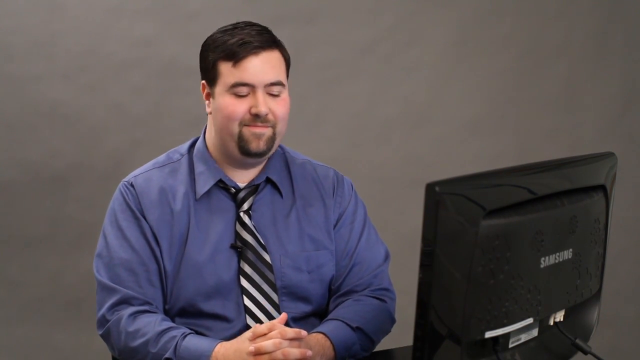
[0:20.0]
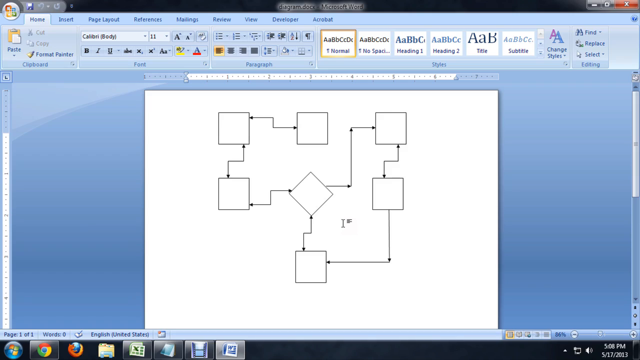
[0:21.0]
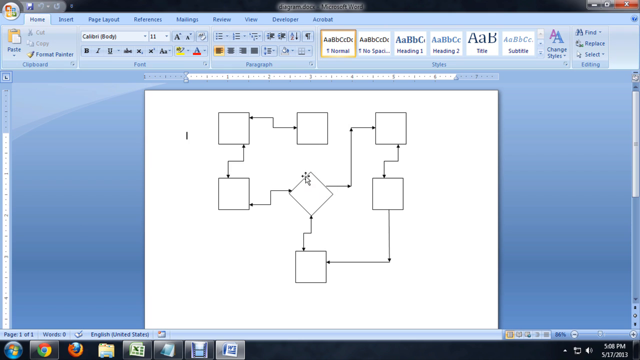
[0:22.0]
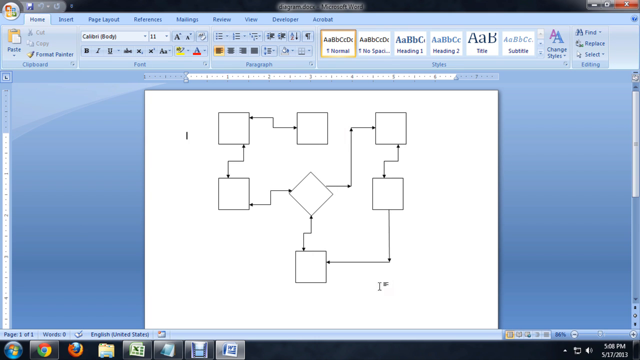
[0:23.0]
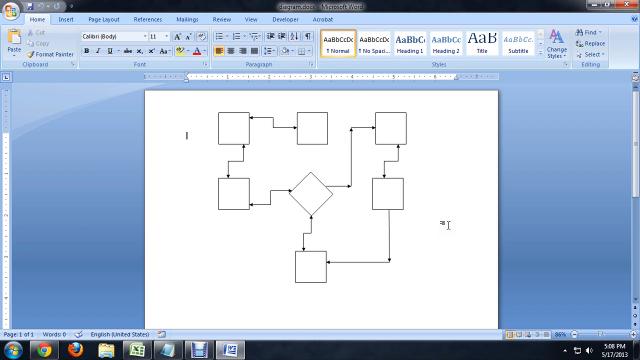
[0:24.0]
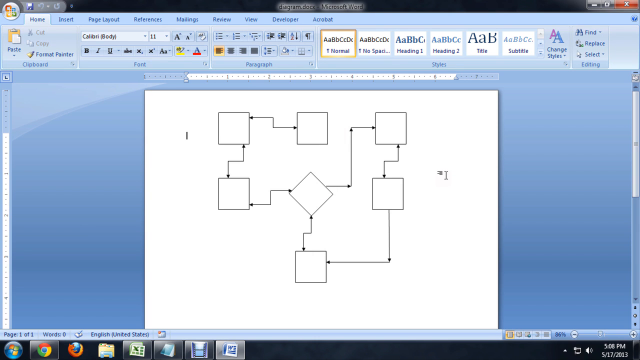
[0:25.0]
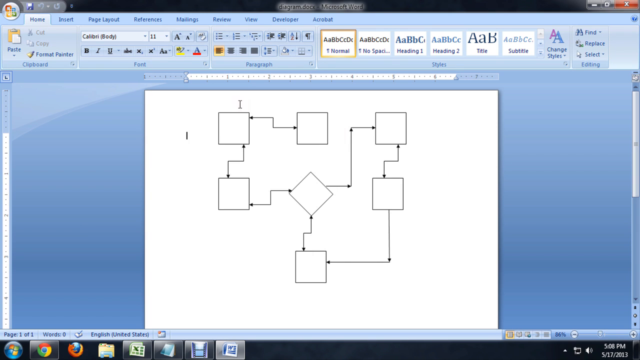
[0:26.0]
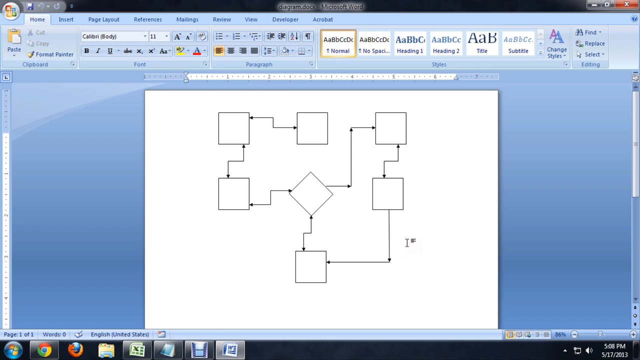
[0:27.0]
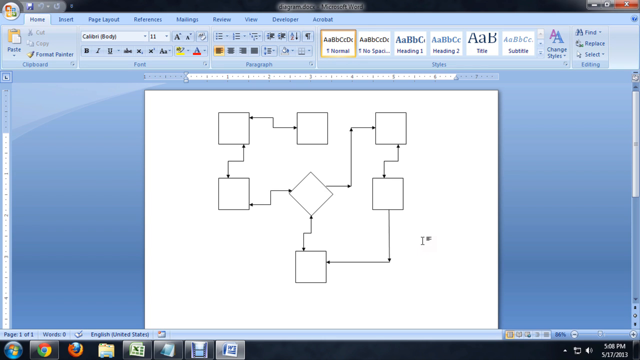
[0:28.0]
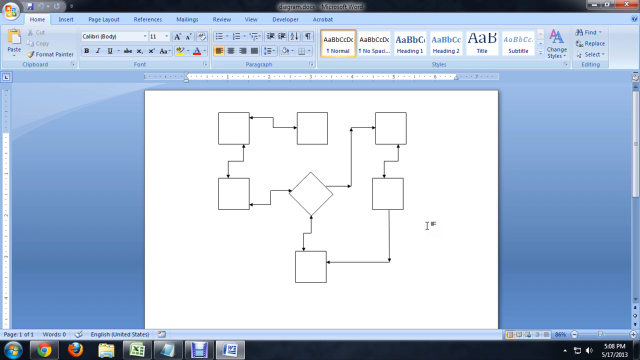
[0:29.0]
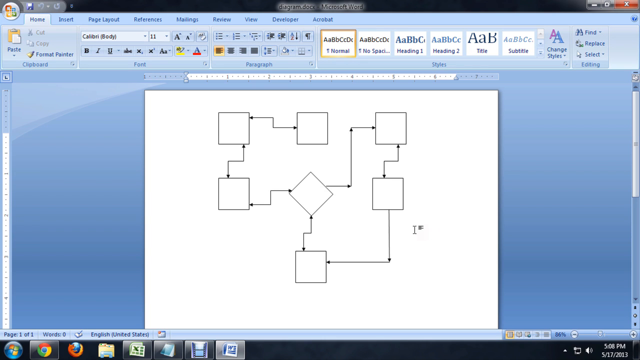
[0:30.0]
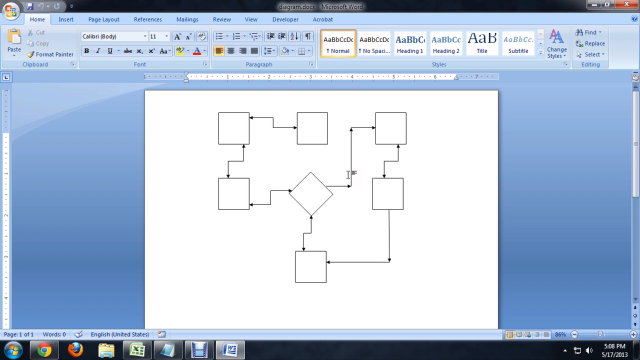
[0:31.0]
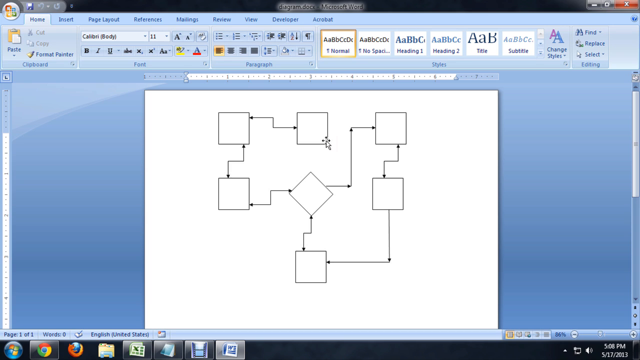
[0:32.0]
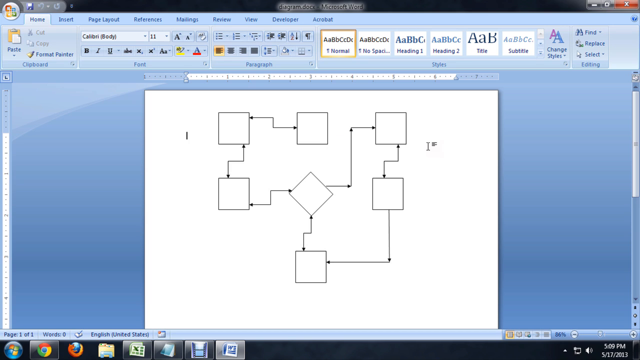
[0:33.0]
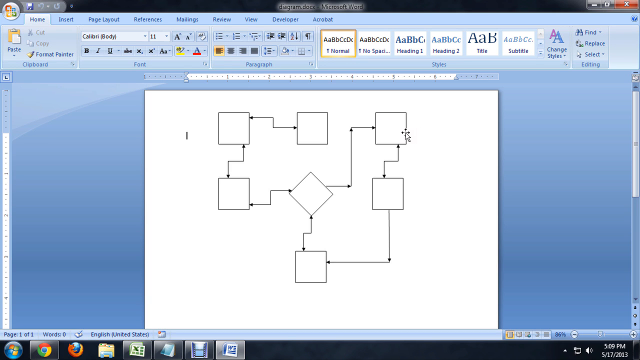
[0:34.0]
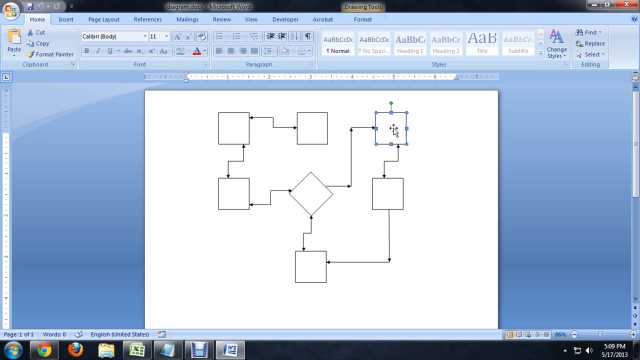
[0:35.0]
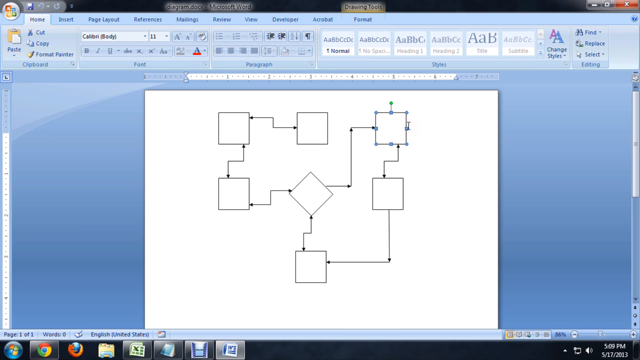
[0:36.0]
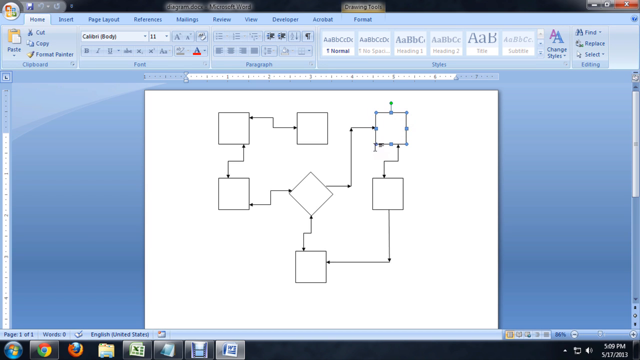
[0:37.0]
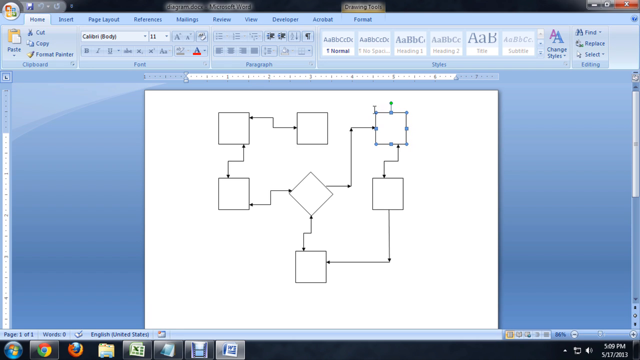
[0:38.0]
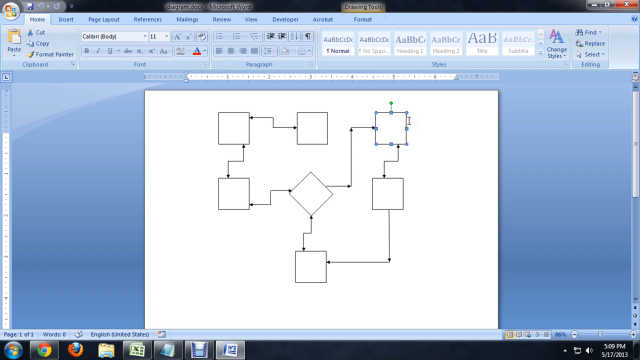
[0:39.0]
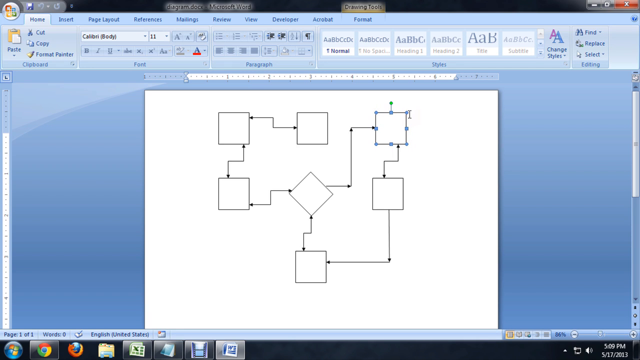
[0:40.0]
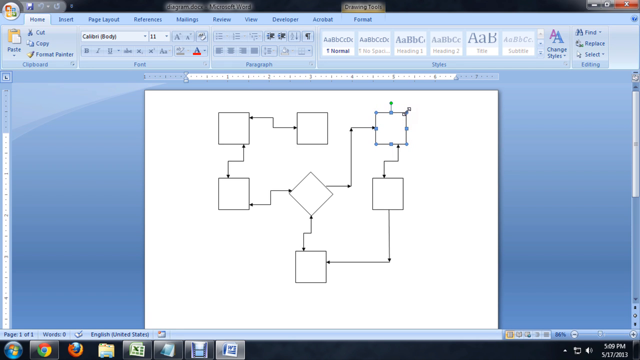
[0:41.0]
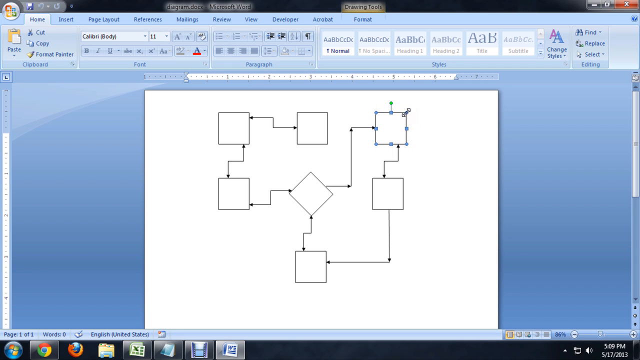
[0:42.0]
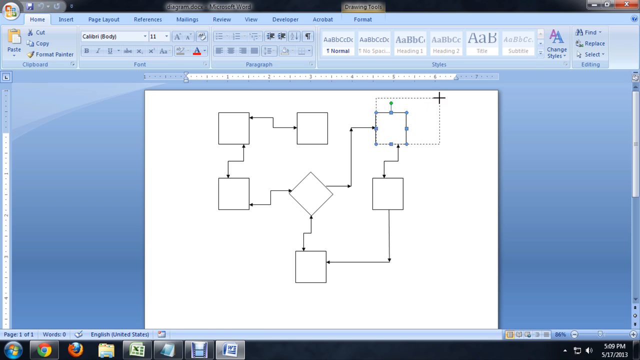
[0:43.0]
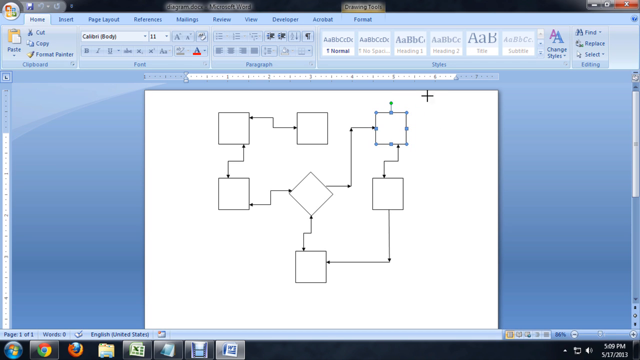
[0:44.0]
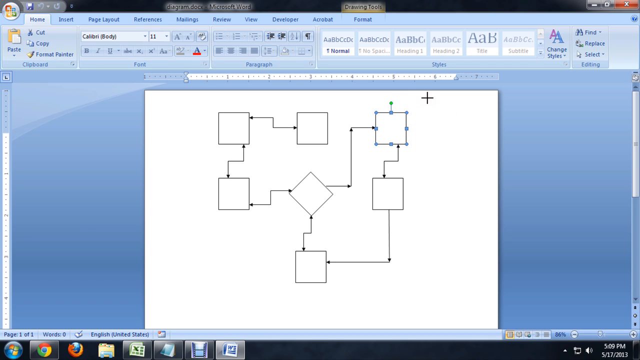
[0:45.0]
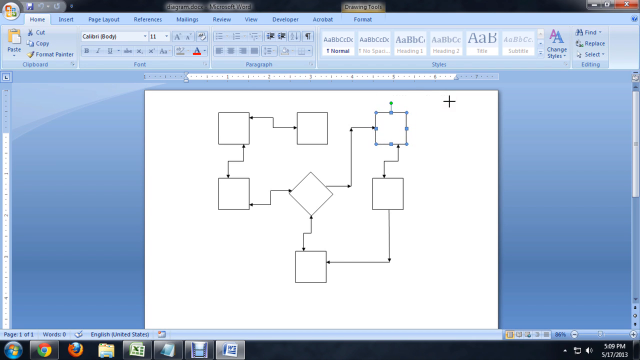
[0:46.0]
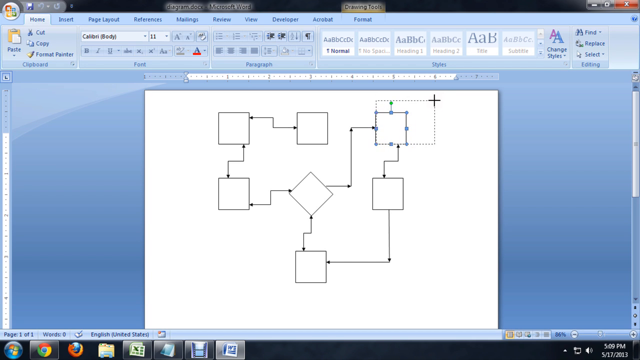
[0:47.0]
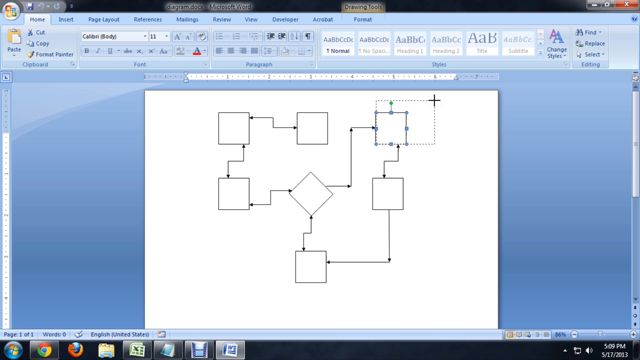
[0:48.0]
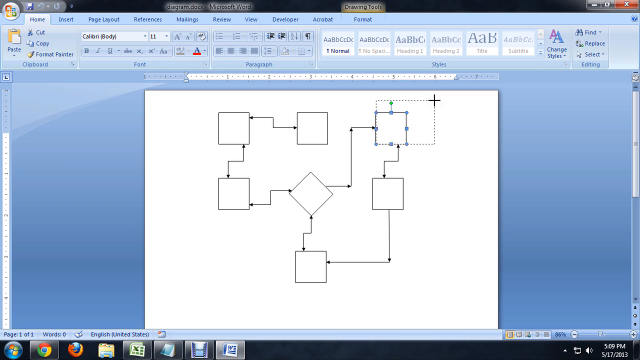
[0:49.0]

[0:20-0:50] Josiah Rea turns his head to the right, facing the Samsung computer monitor. The scene transitions to a screen recording of a Microsoft Word window: a white page on a blue background containing squares connected with arrows, with a diamond in the middle. There are six squares in total and one diamond in the very middle. The cursor circles around the squares, then clicks on the top right square; an annotation of multiple small blue squares appears on it, indicating it has been selected. The cursor circles around the selected top right square, and there is an attempt to drag it using a cropping tool; the cursor turns into a black cross, apparently indicating the cropping tool is in use.